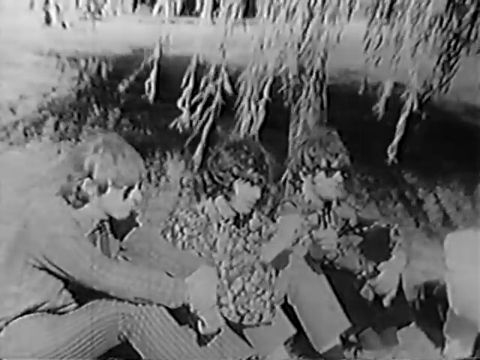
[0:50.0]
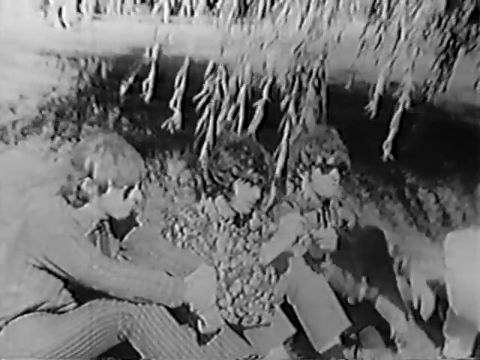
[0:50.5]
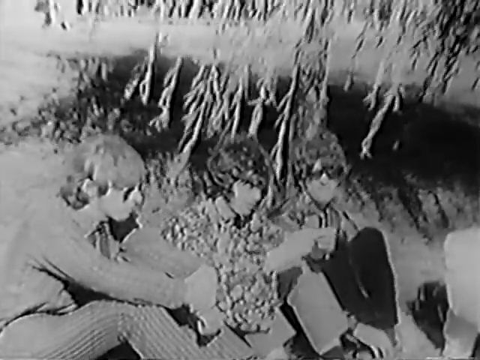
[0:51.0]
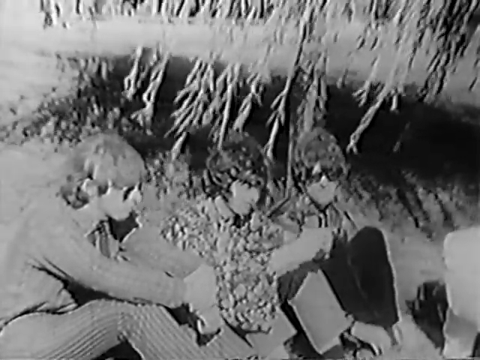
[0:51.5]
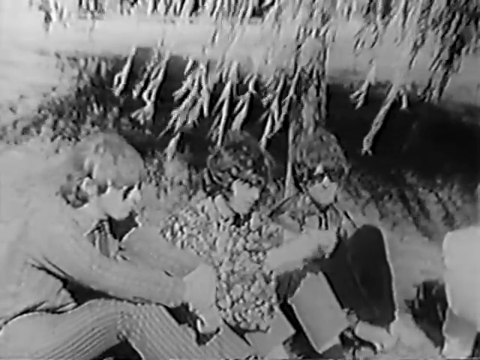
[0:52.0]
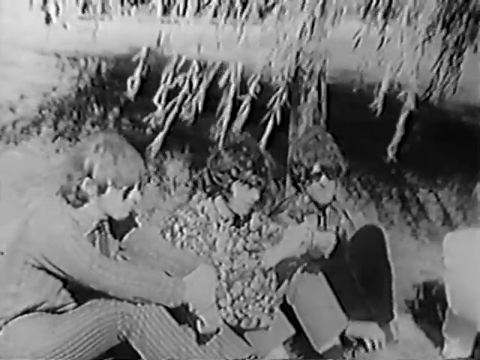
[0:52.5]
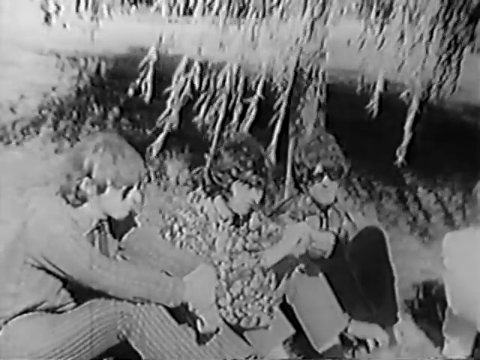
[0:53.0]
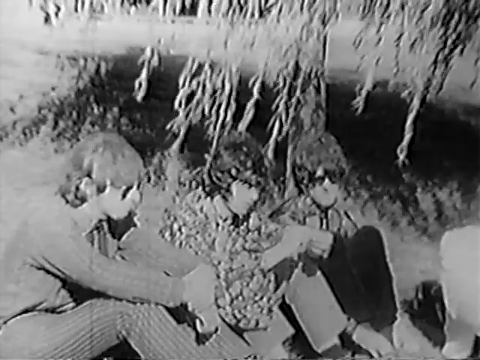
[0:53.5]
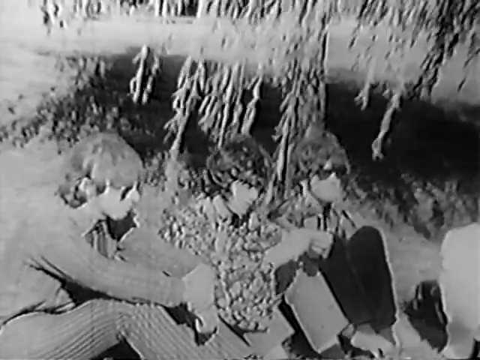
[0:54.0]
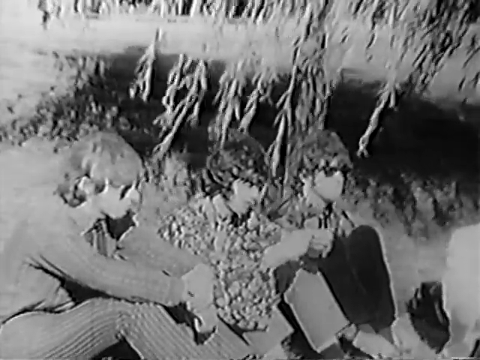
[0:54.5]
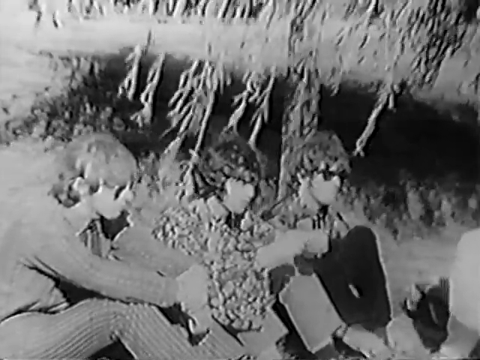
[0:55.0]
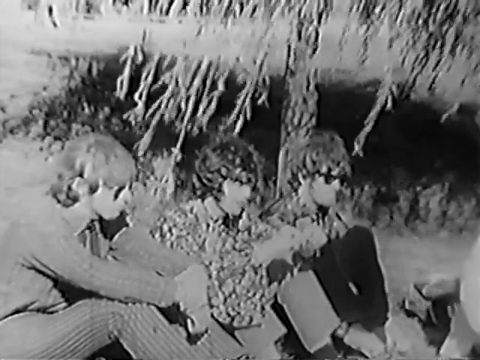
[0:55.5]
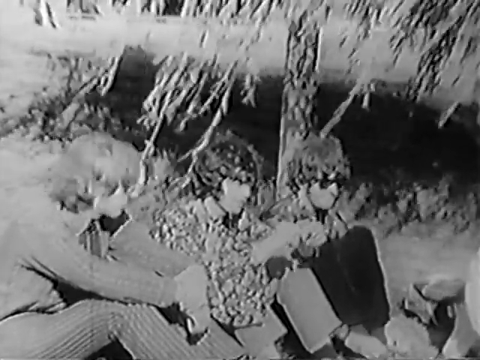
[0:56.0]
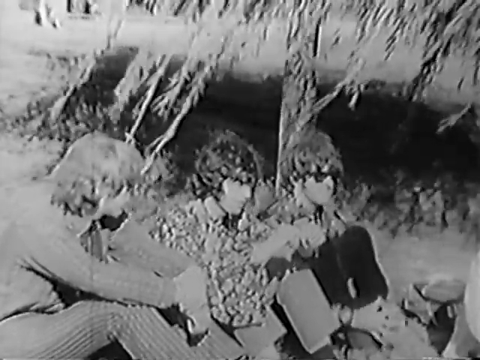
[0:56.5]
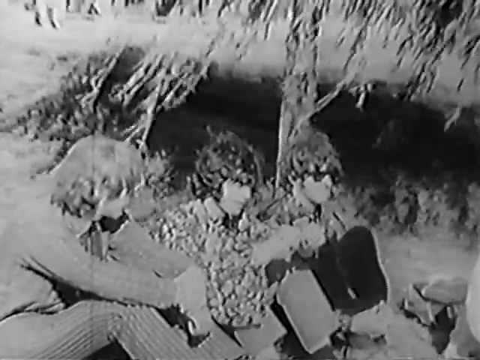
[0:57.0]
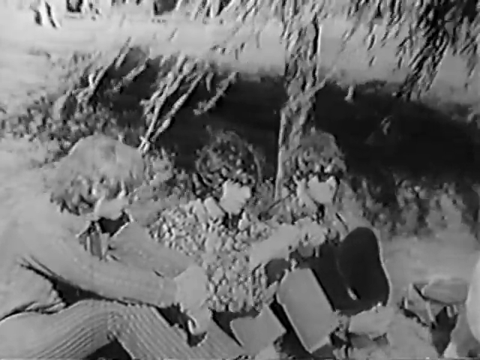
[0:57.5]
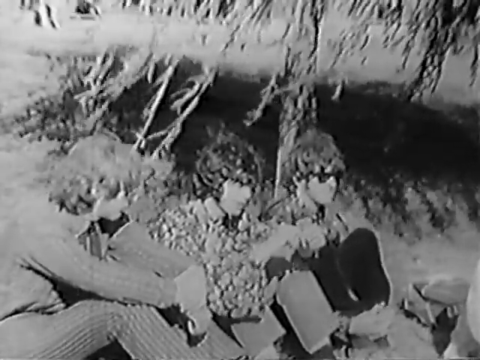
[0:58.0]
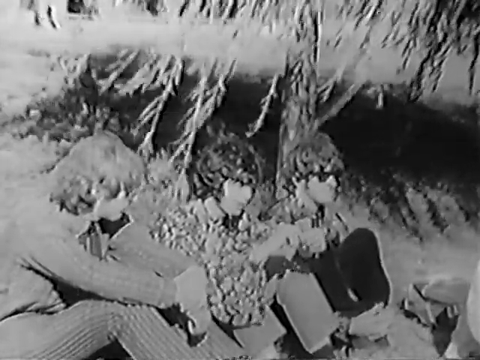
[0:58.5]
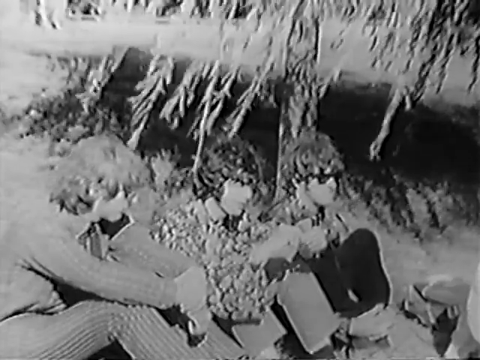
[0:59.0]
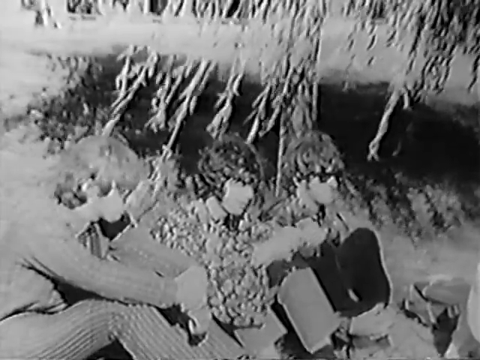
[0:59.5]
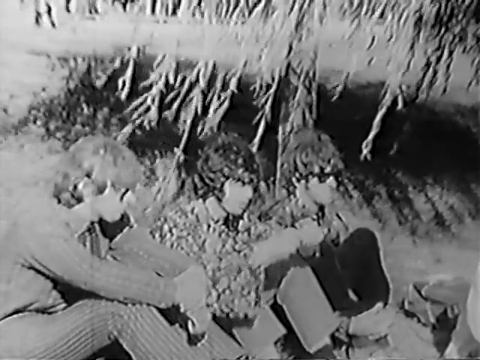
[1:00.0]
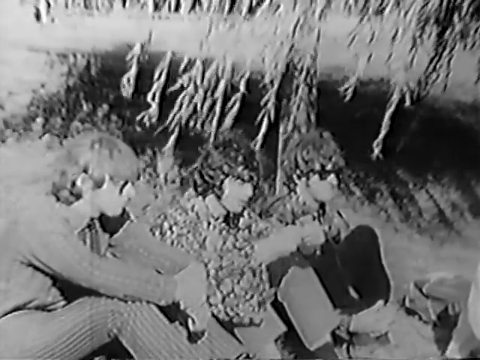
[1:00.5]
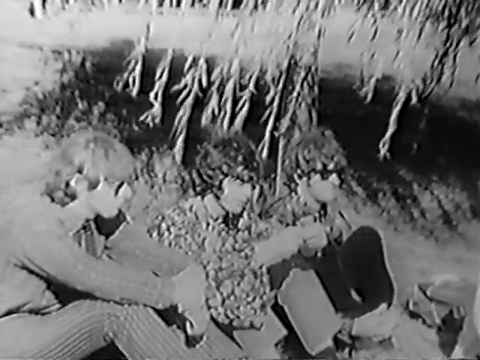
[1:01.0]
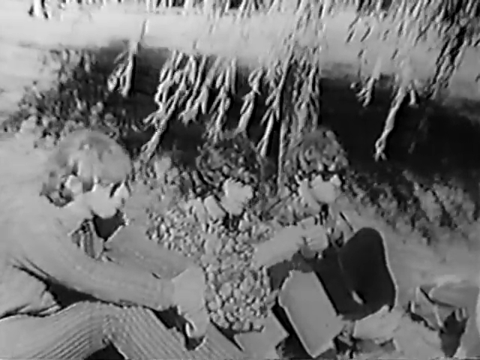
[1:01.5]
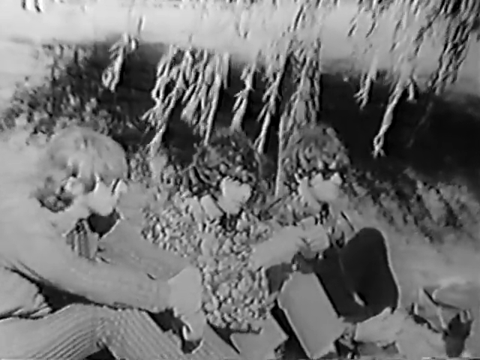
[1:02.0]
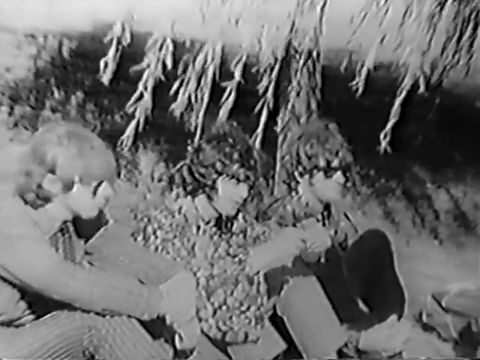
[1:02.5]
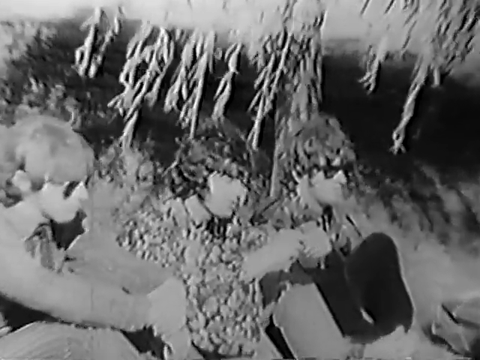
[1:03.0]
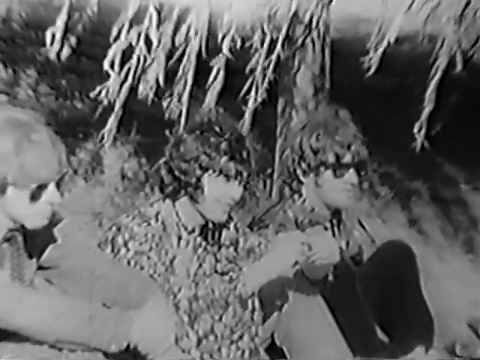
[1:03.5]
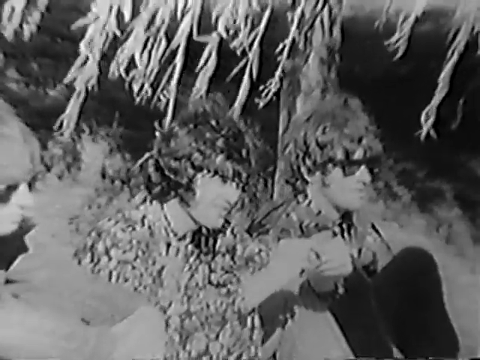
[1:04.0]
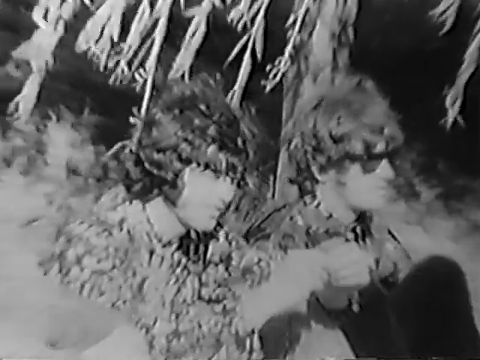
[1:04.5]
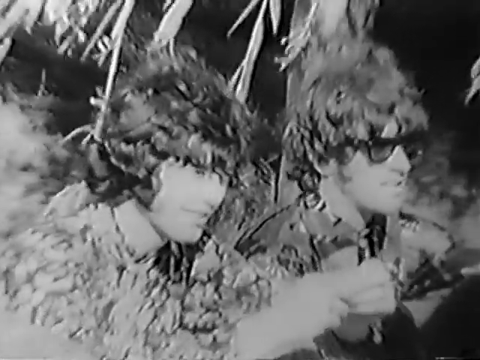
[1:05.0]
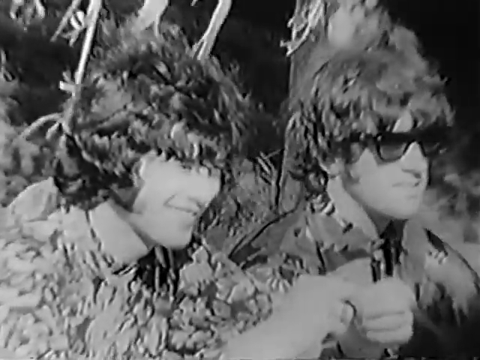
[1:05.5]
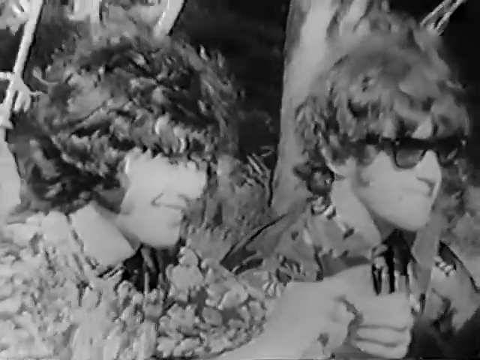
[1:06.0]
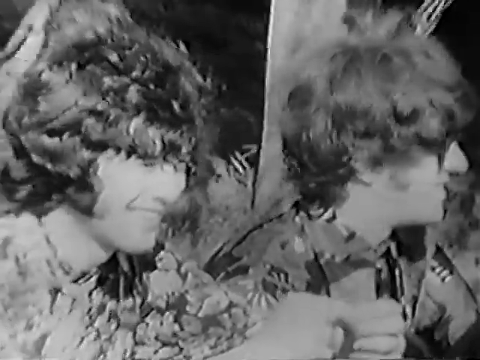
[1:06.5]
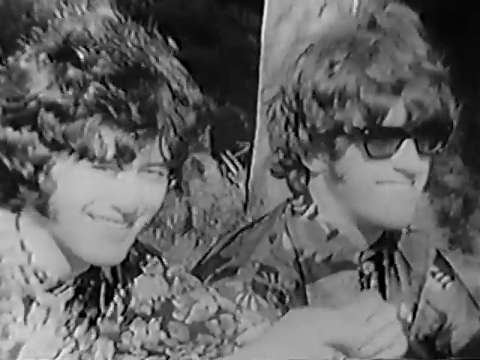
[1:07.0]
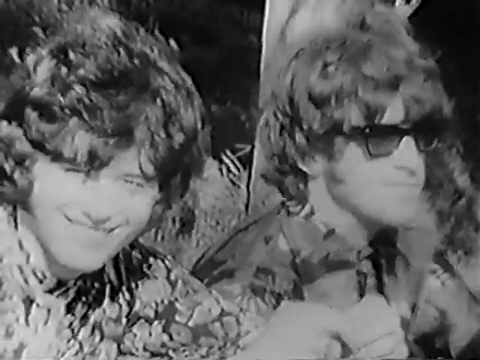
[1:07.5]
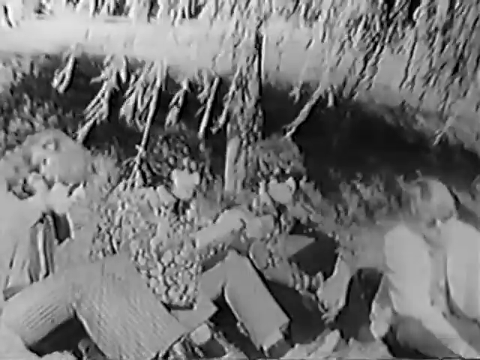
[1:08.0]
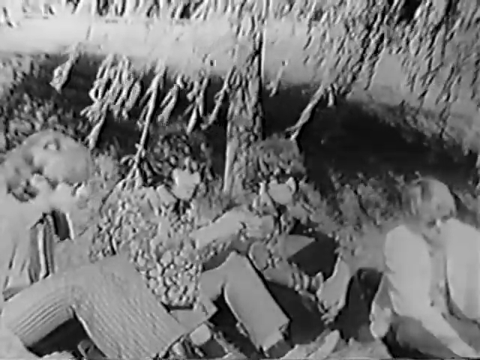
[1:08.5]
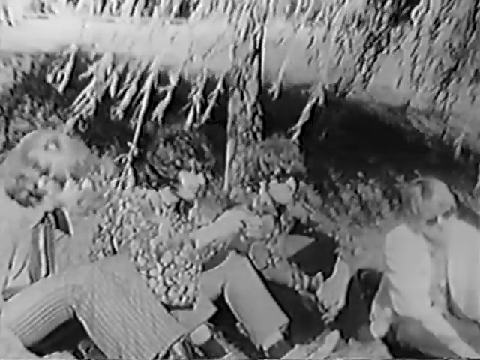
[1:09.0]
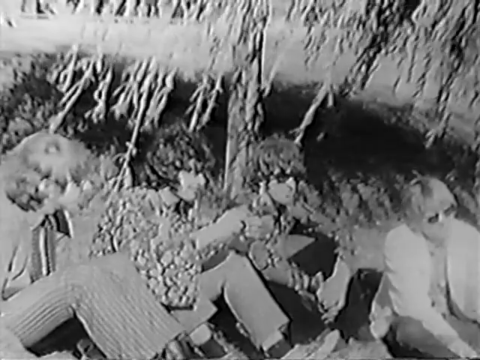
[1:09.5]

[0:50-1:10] The camera is on the three men with a tree in the background that is almost like a willow, its little branches hanging straight down and swaying in the wind behind them. The camera briefly closes in on the two individuals on the right, then returns to the panned-out shot of all three with the tree branches waving in the breeze; they are all talking as they are interviewed. The camera closes in on those two again, and the one on the left says something, after which they both smile and laugh; then the camera pans out again. The man on the left is in all solid colors, with a long-sleeve shirt slightly lighter than his dark pants, and has light-colored shaggy hair. The one in the middle wears a heavily patterned, collared long-sleeve shirt and medium-dark pants. The third man on the hill also wears a patterned button-down shirt, with black or very dark pants, dark sunglasses, and dark shaggy hair. The video is black and white, and the shadow of the tree is visible in the background of the shot.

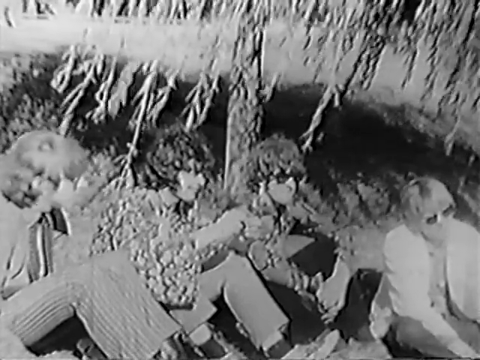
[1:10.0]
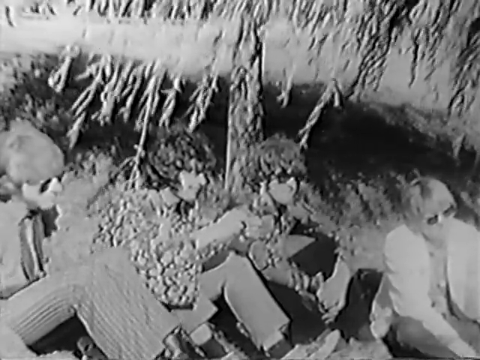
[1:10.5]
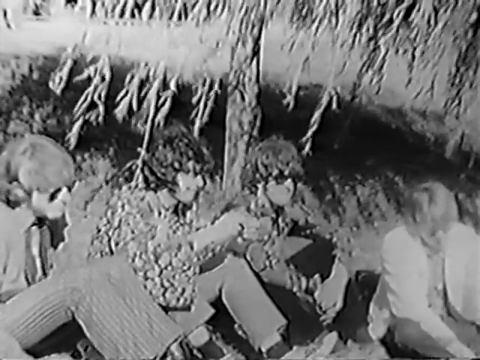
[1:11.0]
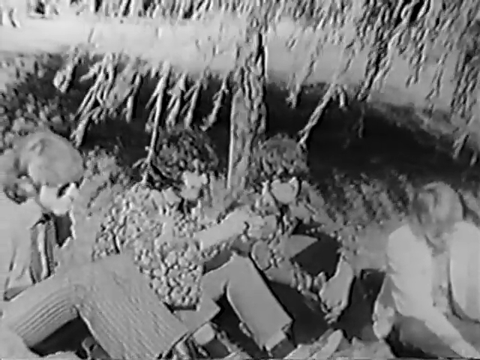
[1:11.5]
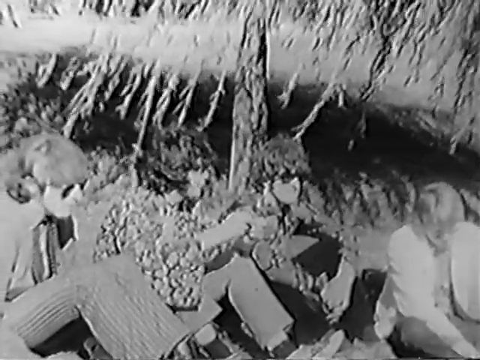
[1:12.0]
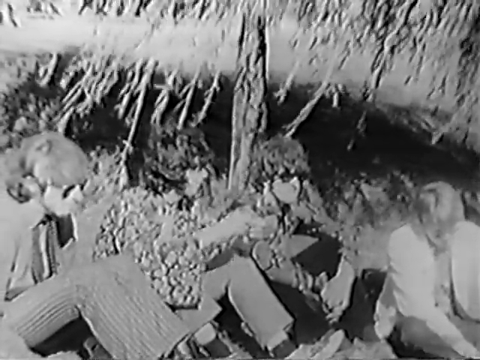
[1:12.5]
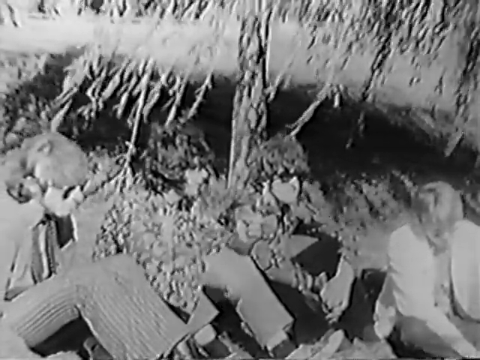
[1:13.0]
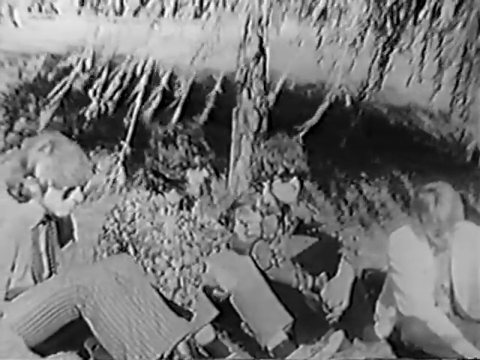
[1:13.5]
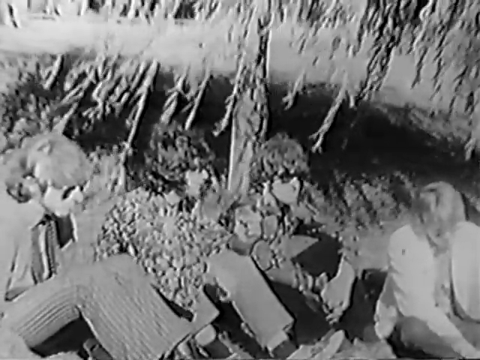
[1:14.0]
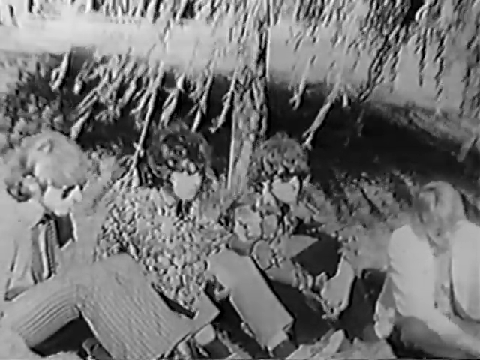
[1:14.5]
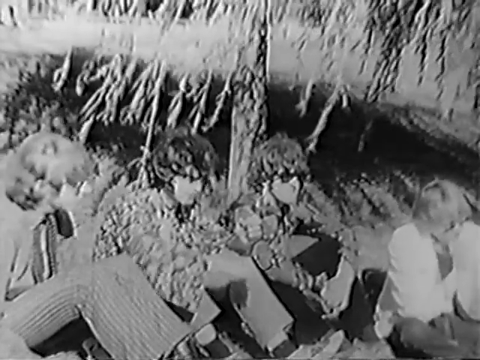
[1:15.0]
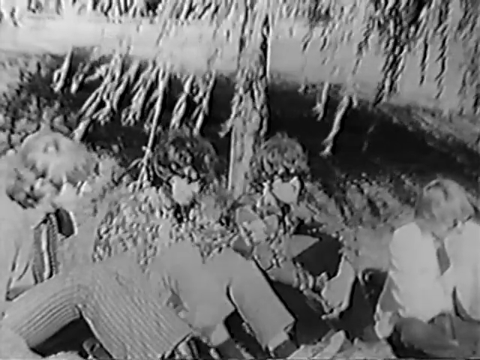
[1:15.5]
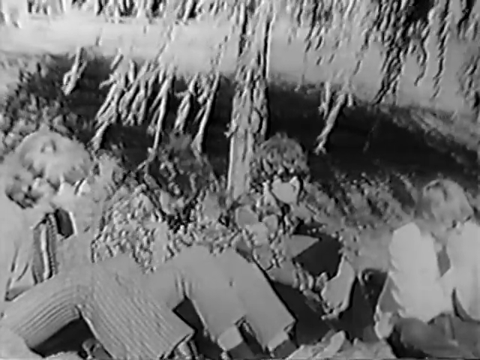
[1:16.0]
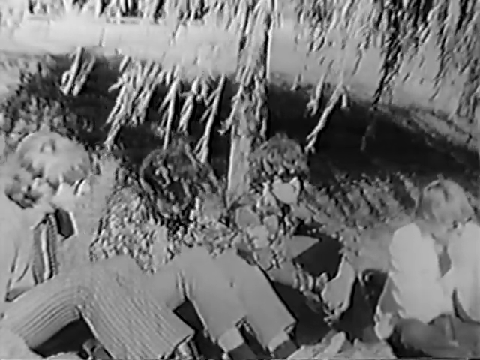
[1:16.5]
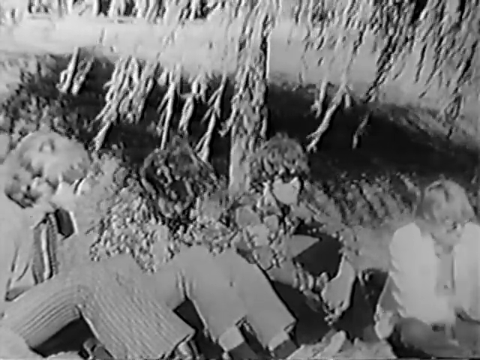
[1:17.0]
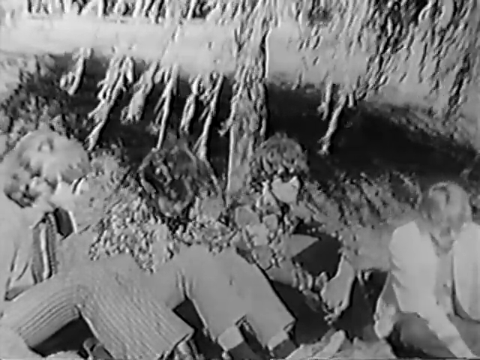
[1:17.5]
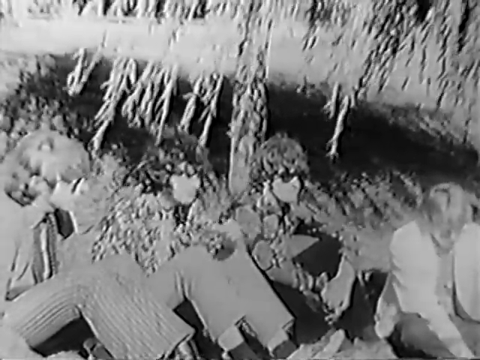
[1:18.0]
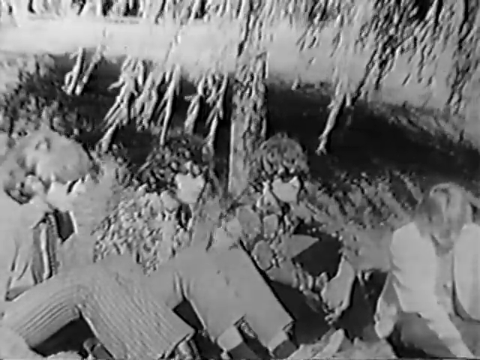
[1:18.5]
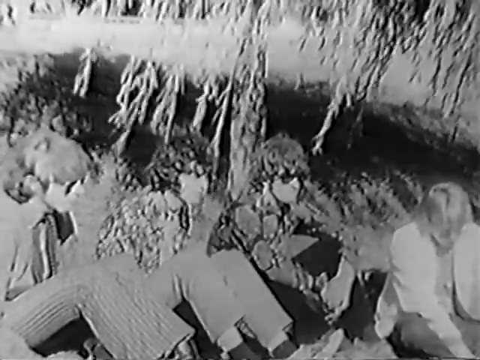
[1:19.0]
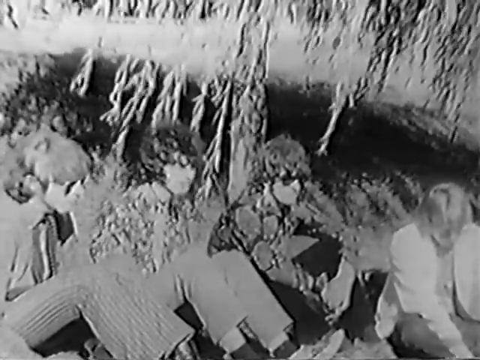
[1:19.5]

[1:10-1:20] The camera pans out to show all four individuals sitting on the hillside, with the tree branches still flowing a little in the background. The man on the right in the lighter clothing and lighter jacket is also in this shot; he seems to be looking down or playing with something in front of him. He sits a little further down the hill than the others, who are right next to each other. At one point he puts his right hand up to his mouth or face. They continue to talk and gesture a little. The person in the middle looks like he is doing most of the talking, while the others look at him or respond to him and fiddle, mostly the man in front. The man talking in the middle also puts his hands down; it looks like they may be plucking pieces of grass. They look like a group of maybe four musicians or individuals being interviewed, talking and interacting as they sit on the grassy hill in front of a single willow-type tree swaying in the wind.